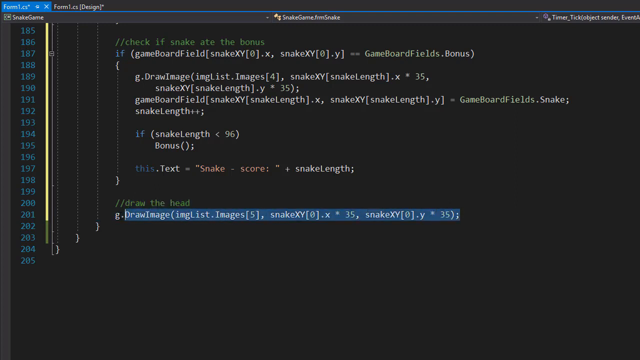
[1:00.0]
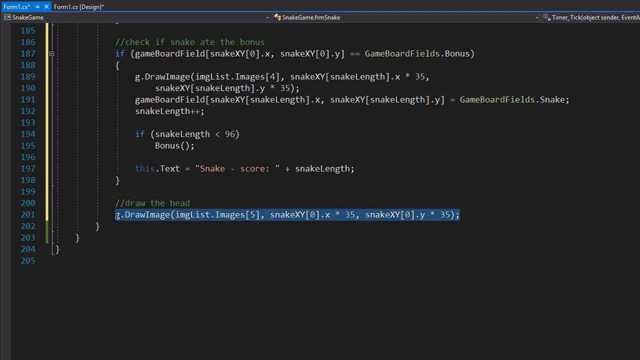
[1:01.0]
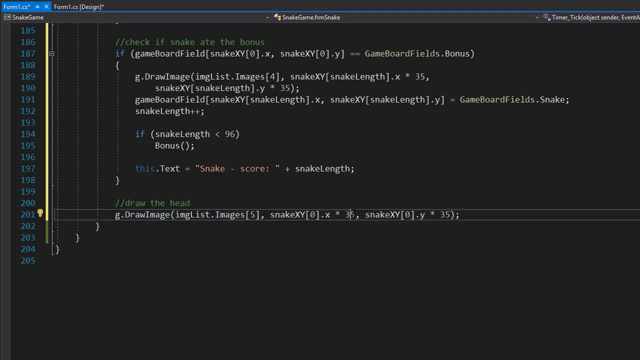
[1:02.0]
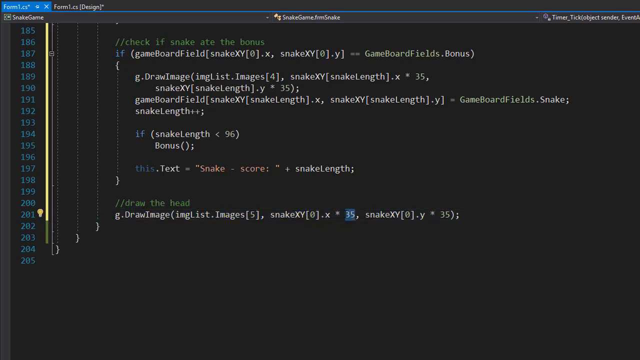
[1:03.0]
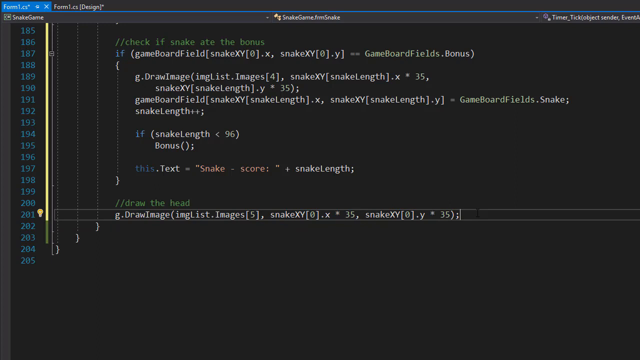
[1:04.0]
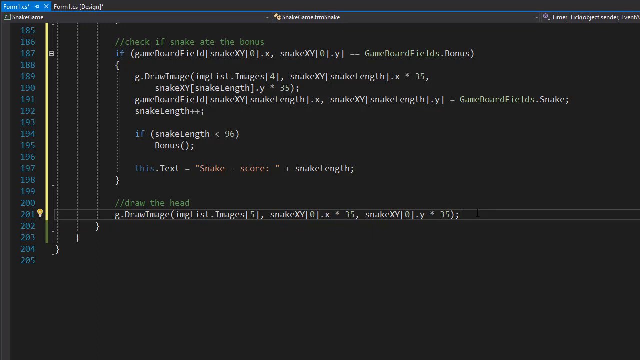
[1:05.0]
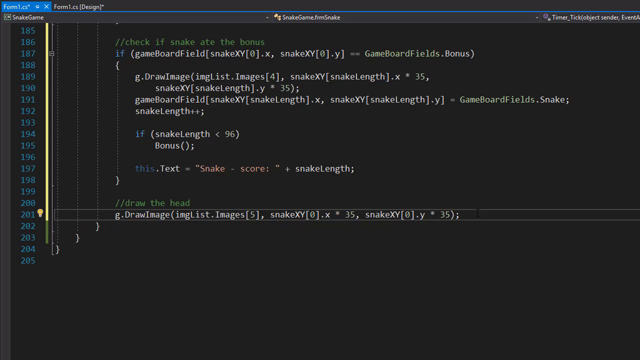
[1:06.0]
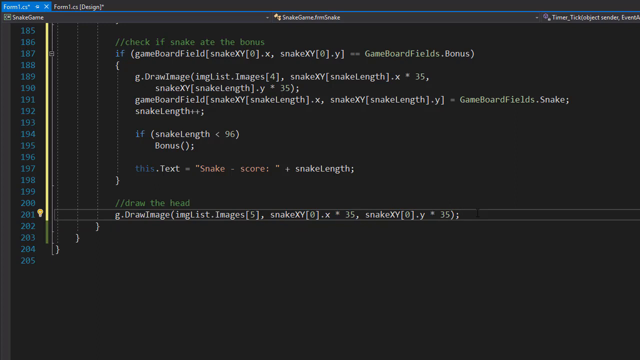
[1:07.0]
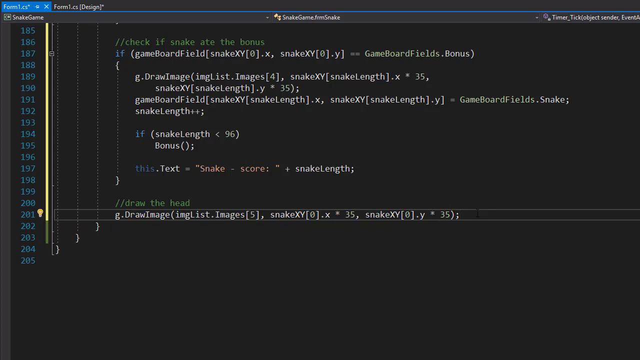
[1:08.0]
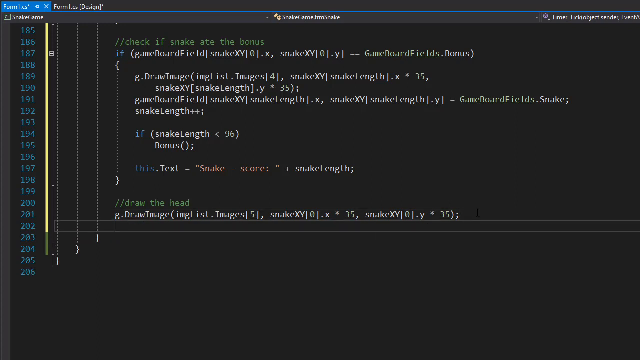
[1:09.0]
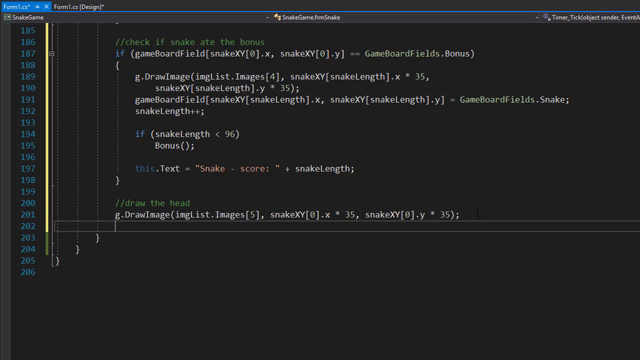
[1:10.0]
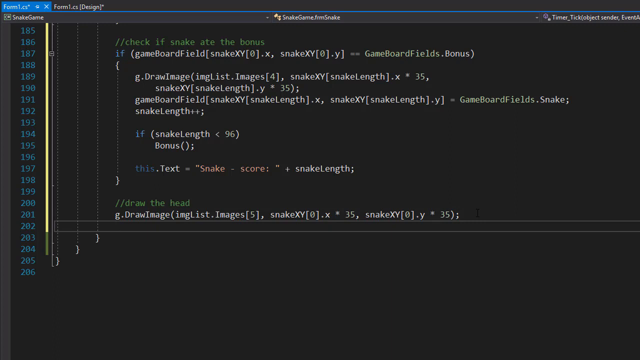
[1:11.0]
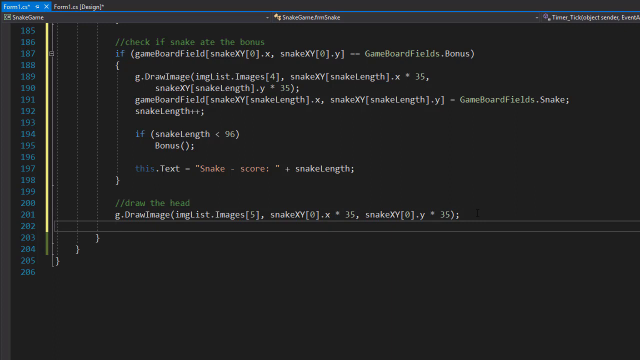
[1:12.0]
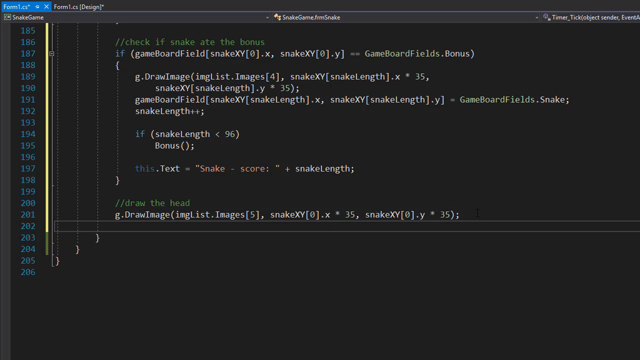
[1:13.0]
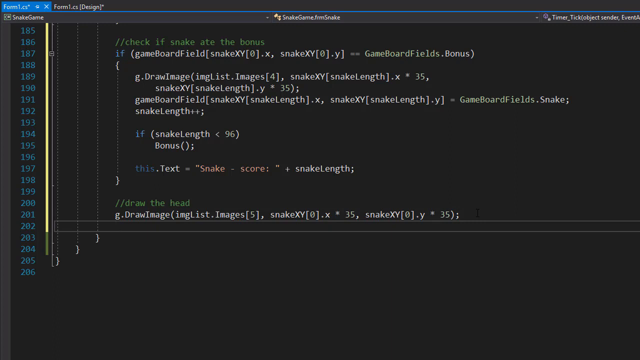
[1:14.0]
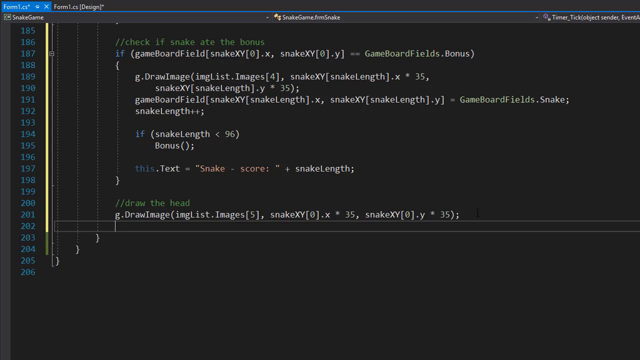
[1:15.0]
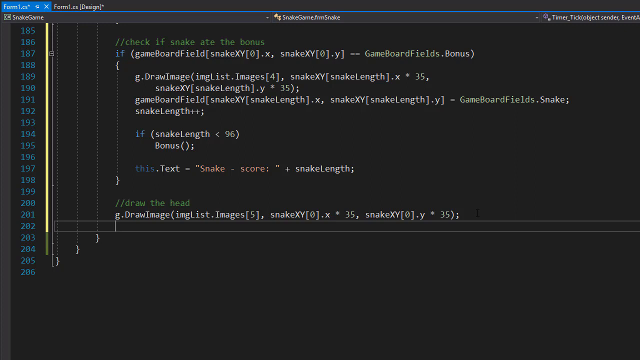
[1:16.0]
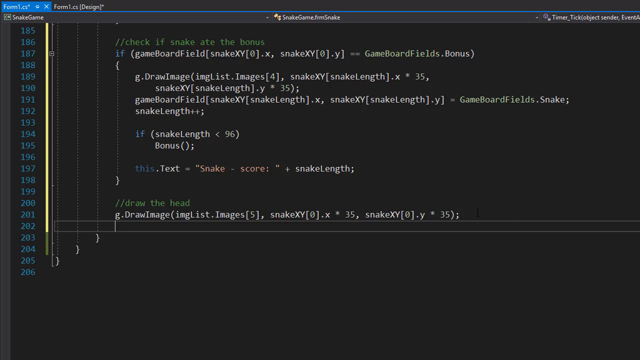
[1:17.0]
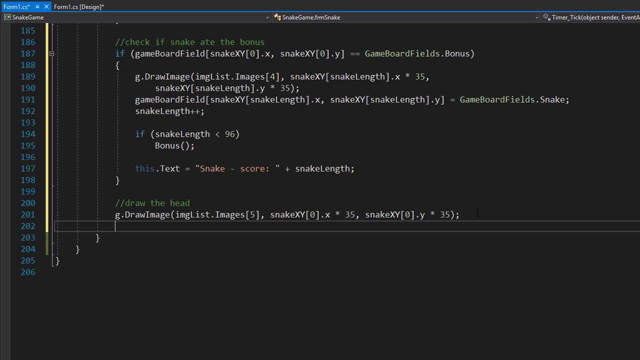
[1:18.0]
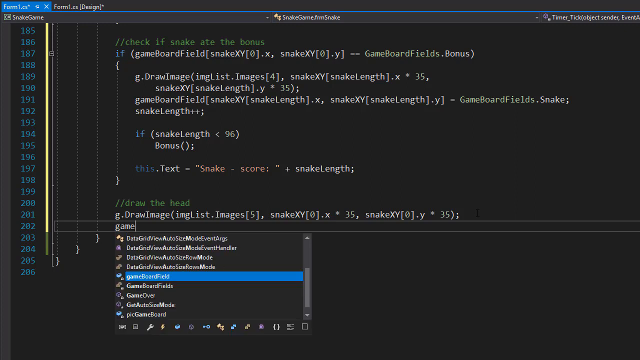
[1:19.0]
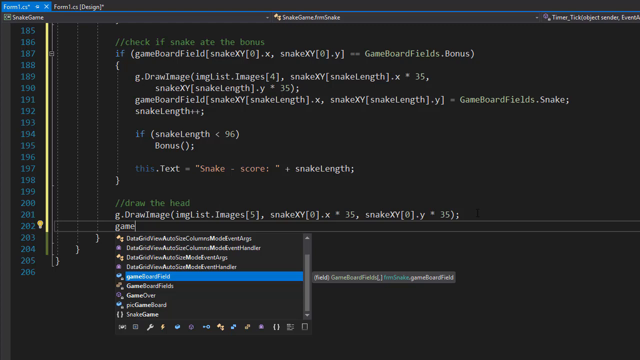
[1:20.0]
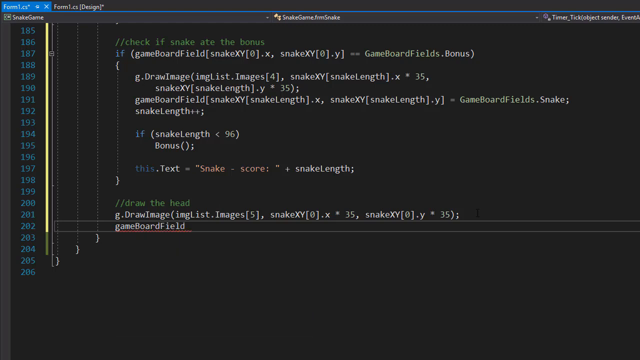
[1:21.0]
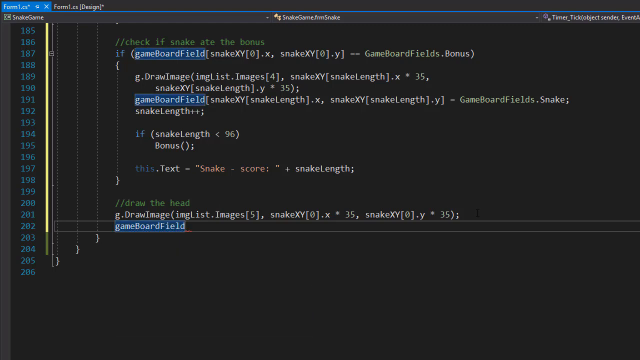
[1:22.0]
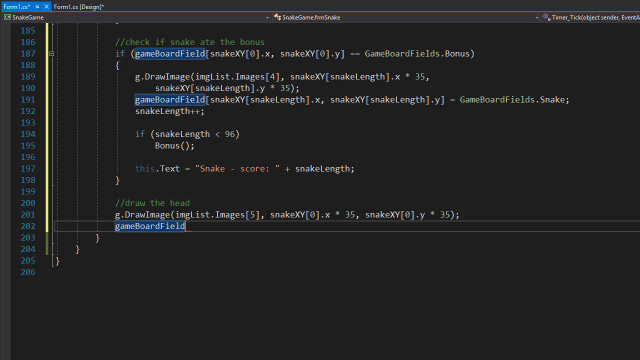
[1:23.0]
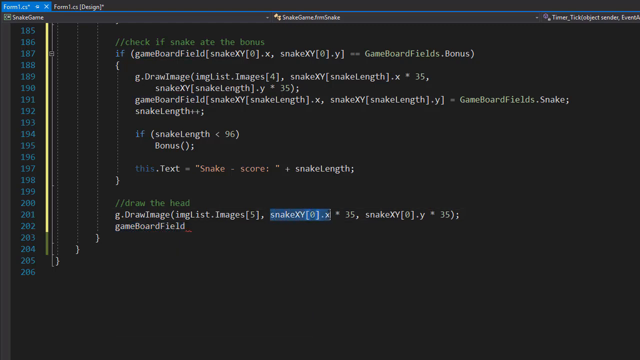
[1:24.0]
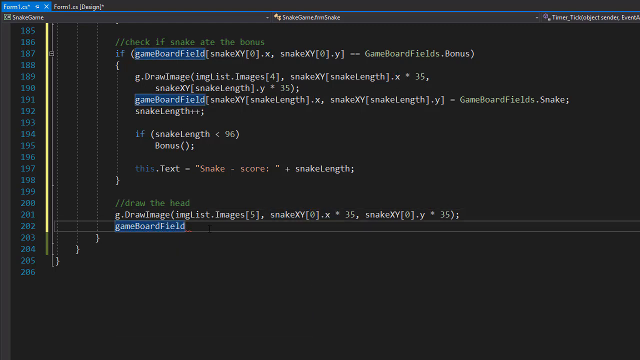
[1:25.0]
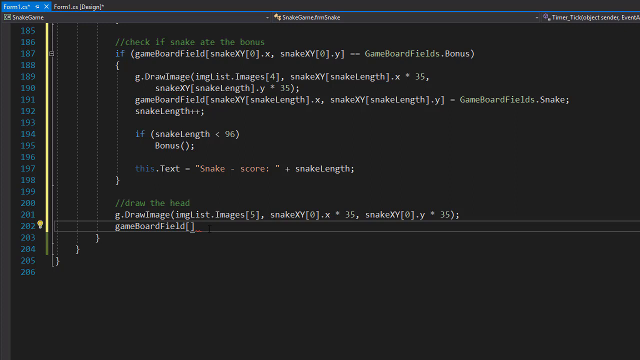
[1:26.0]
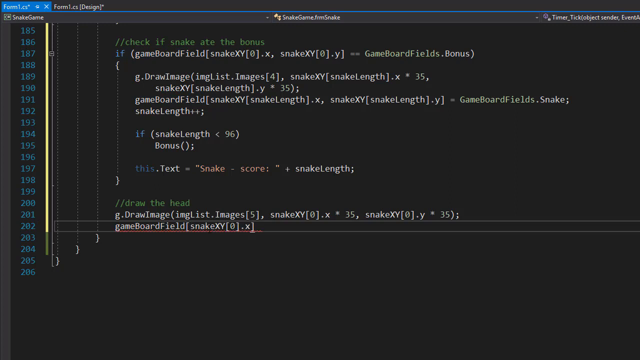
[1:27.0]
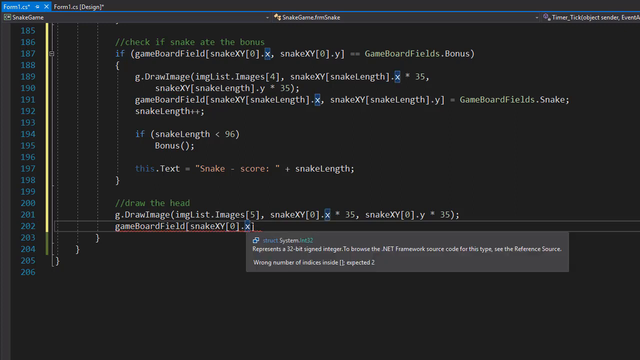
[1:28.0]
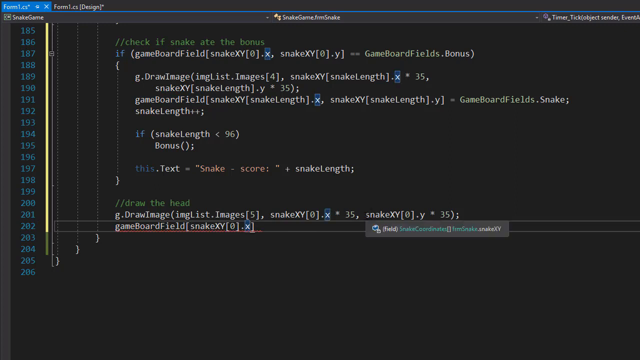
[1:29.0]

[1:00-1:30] On the black background of the compiling program, the user highlights the text of the previous line, then moves to line 202. The cursor blinks for a moment before the user continues entering code. The words gameboard field appear, and as the user types, the other instances of gameboard field become highlighted in blue. The user then copies and pastes the snake XY portion from the previous line and highlights the entire line. The screen shows primarily white text with green, blue and reddish-pink accents for different functions of the programming language.